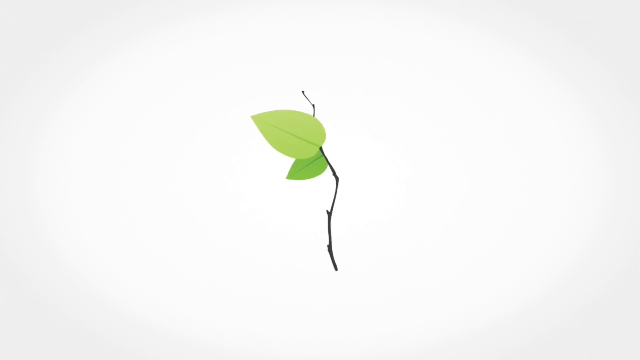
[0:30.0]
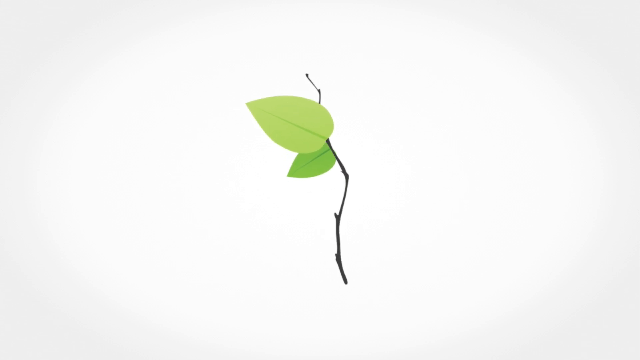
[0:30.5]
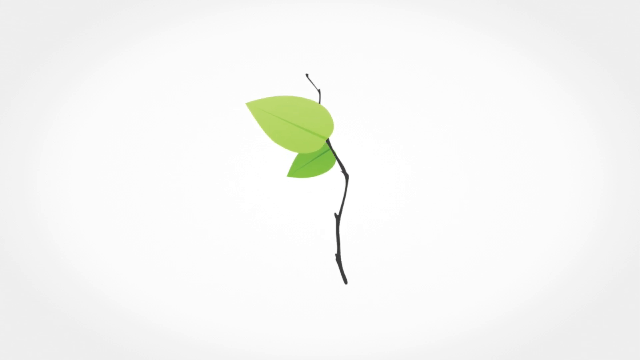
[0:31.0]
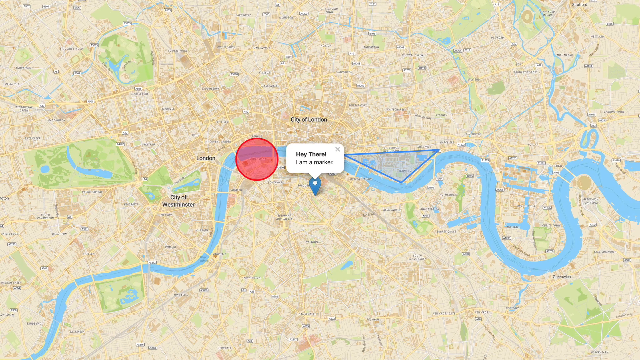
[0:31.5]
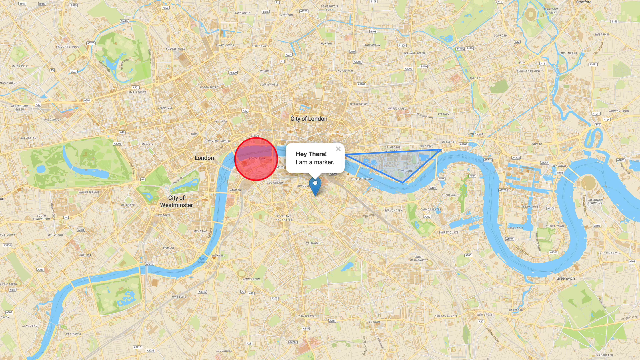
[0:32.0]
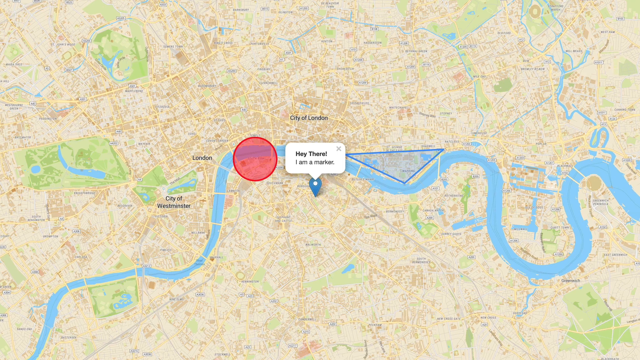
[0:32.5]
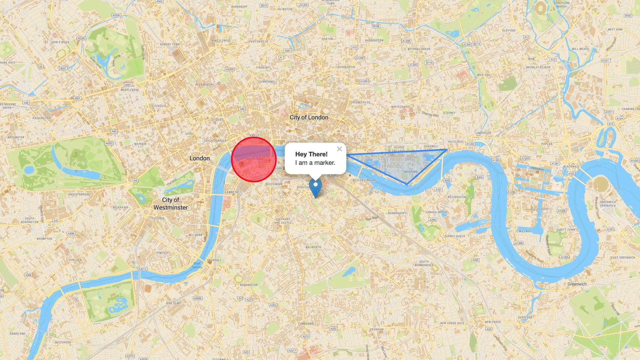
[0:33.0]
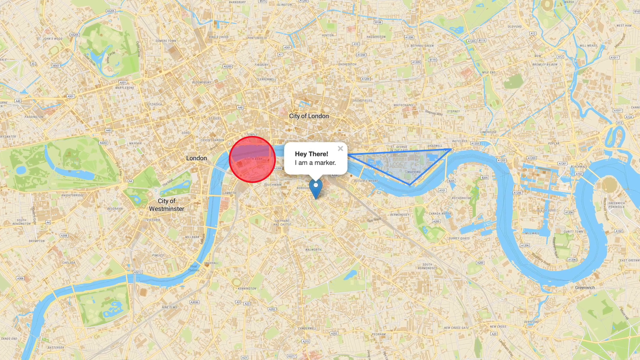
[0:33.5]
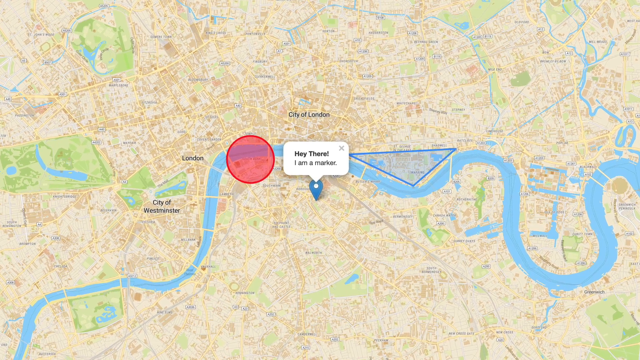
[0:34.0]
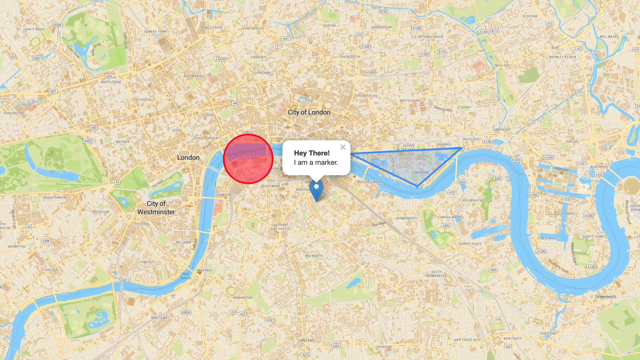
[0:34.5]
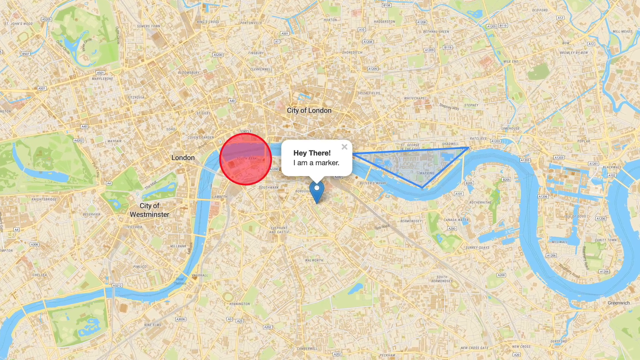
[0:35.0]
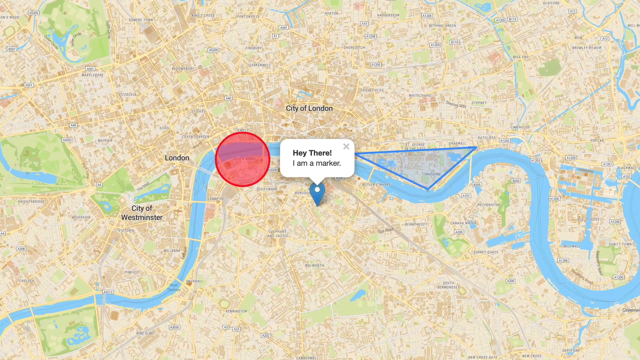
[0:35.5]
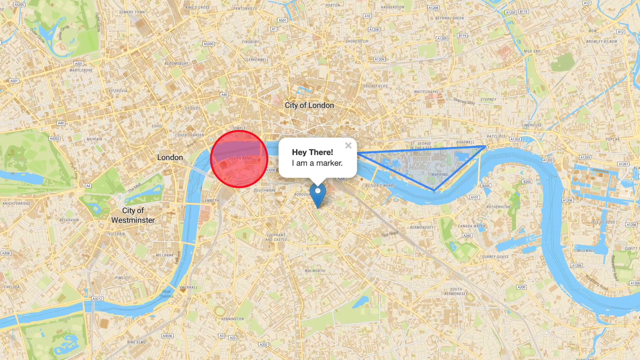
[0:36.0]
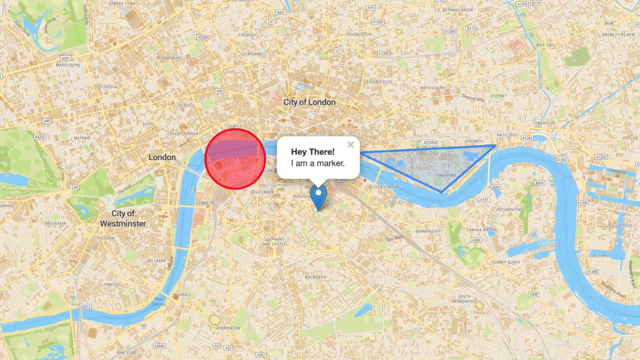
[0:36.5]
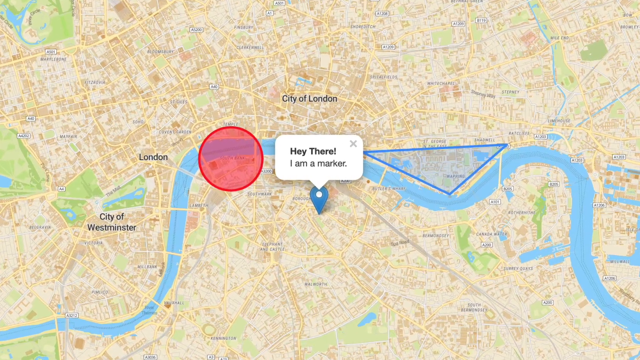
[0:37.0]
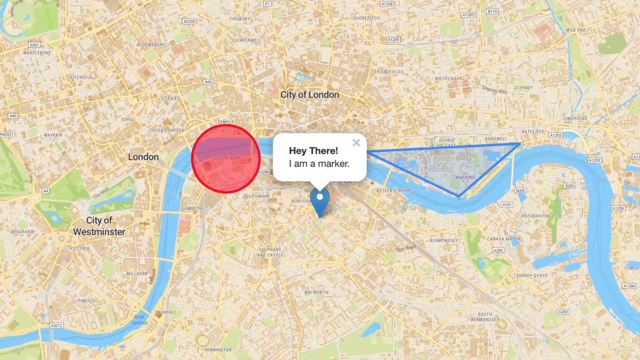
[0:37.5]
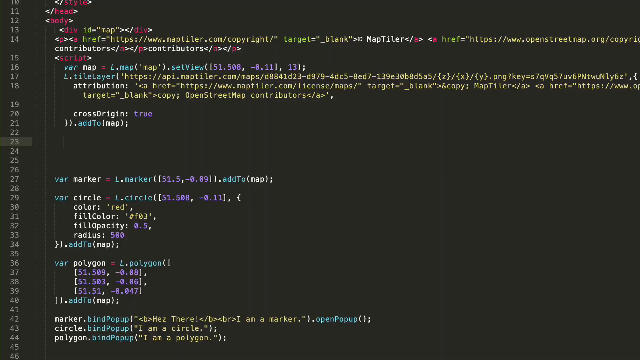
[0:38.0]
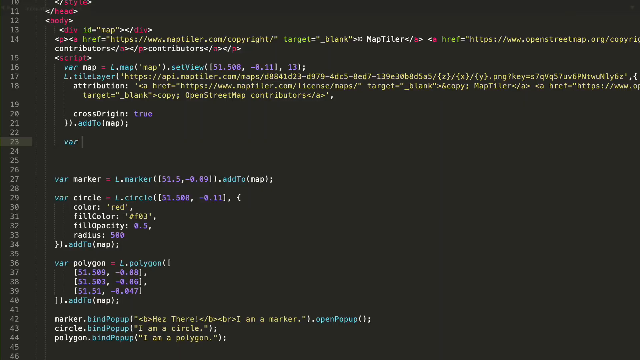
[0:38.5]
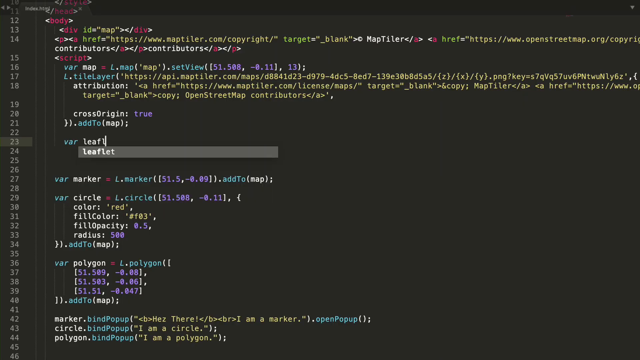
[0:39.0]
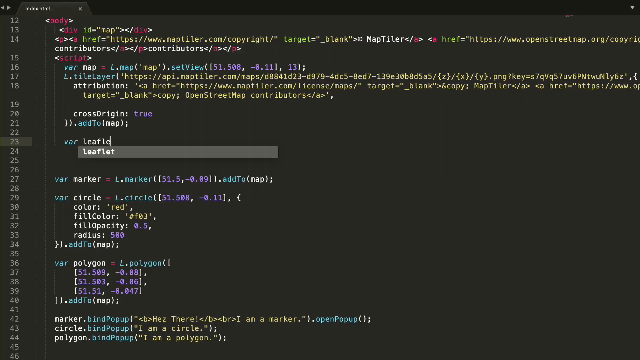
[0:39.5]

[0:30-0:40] A big map fills the background, and in the center of the map the text "hi there, I'm a marker" appears, with a little blue marker underneath it. To the left of it is a red circle, and to the right is a blue obtuse triangle turned upside down so its apex points downward. The view zooms in on the marker in the middle. The video then switches to a coding page, where a variable is being named by typing "var" and then "leaflet I".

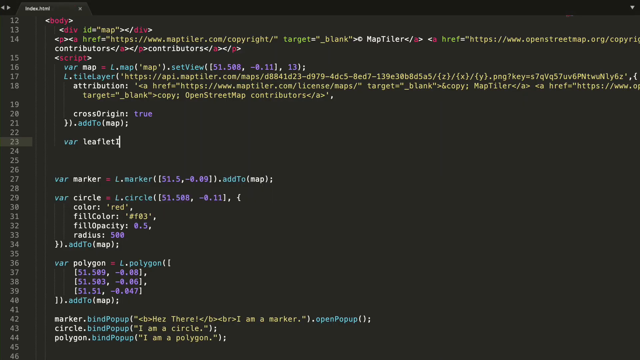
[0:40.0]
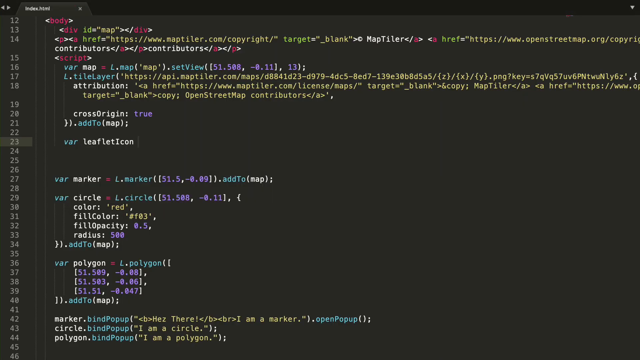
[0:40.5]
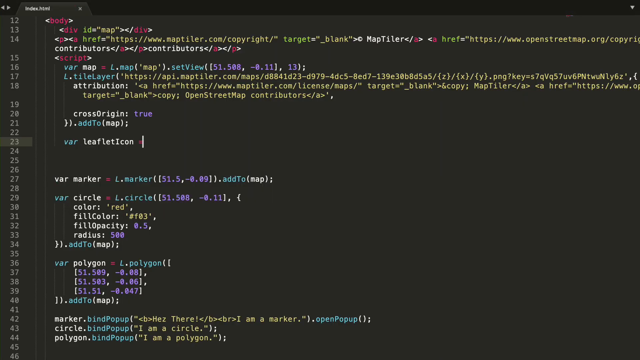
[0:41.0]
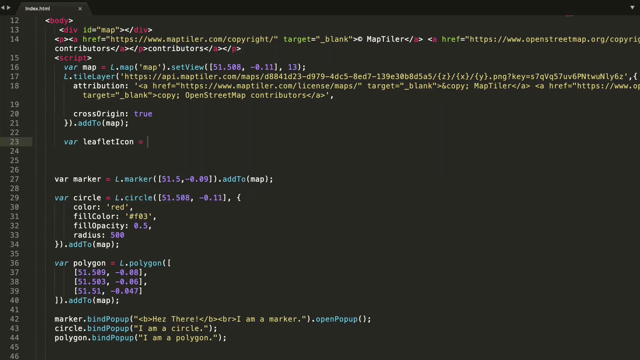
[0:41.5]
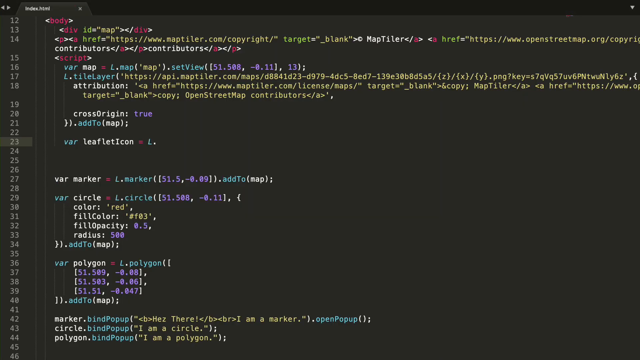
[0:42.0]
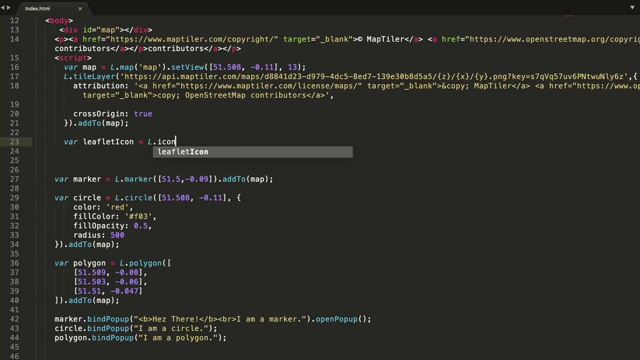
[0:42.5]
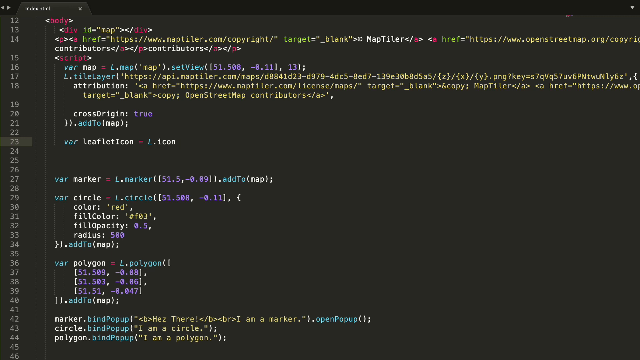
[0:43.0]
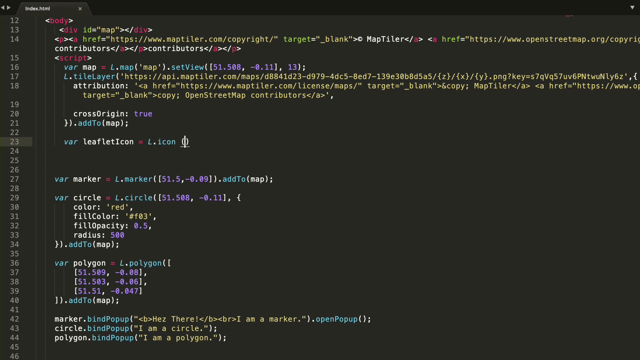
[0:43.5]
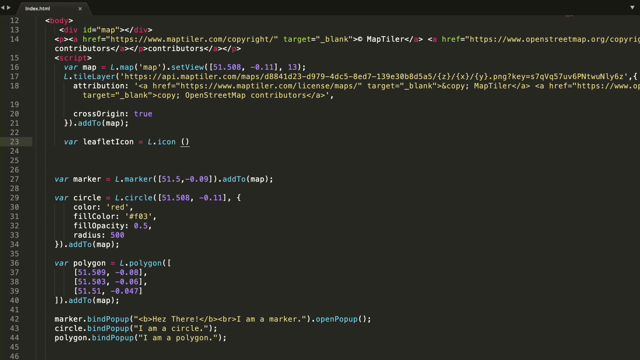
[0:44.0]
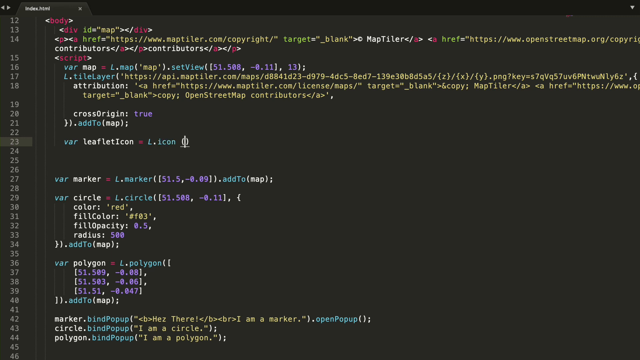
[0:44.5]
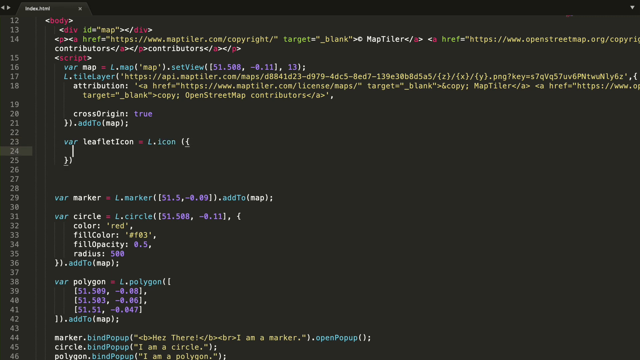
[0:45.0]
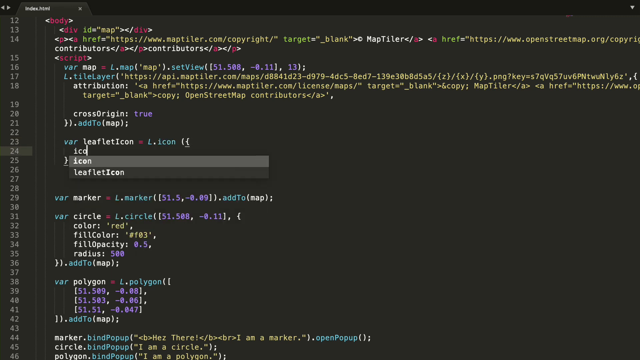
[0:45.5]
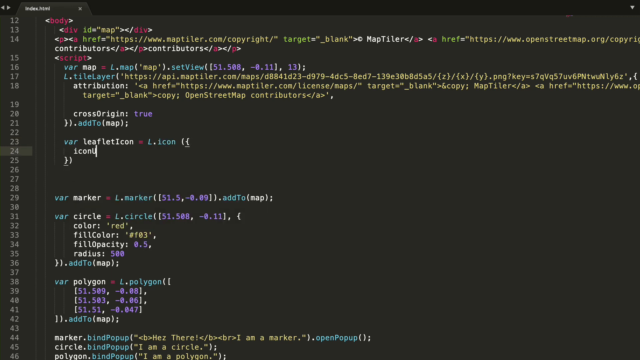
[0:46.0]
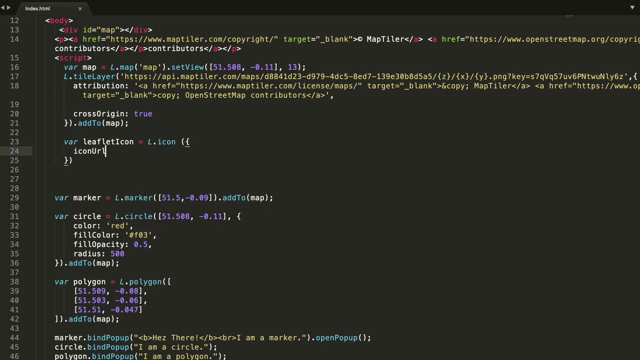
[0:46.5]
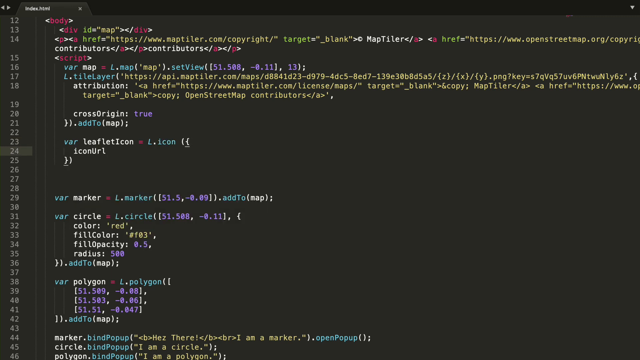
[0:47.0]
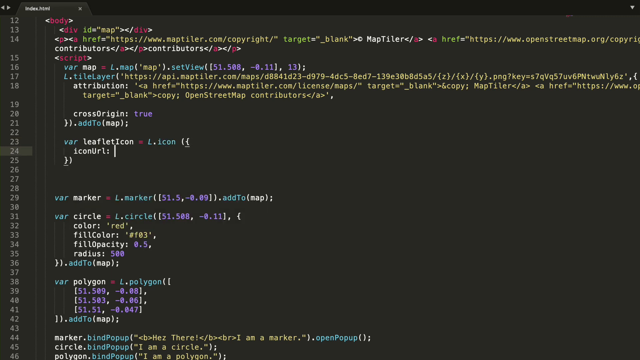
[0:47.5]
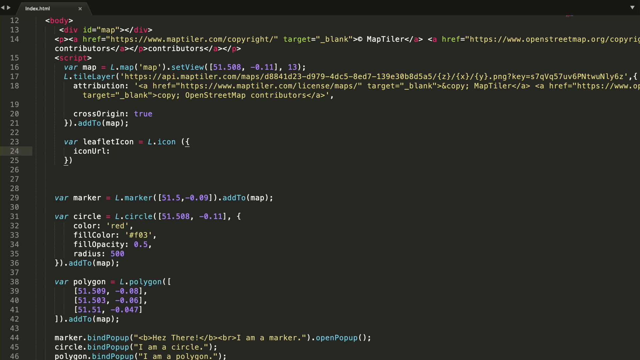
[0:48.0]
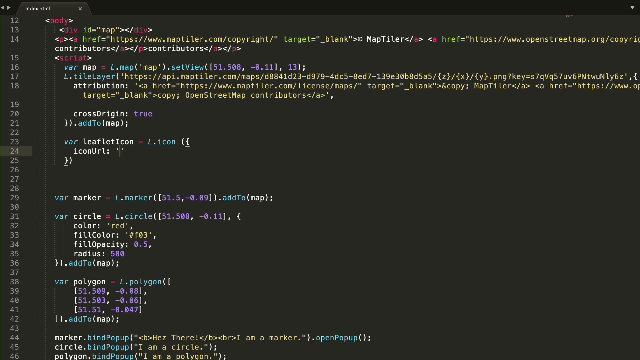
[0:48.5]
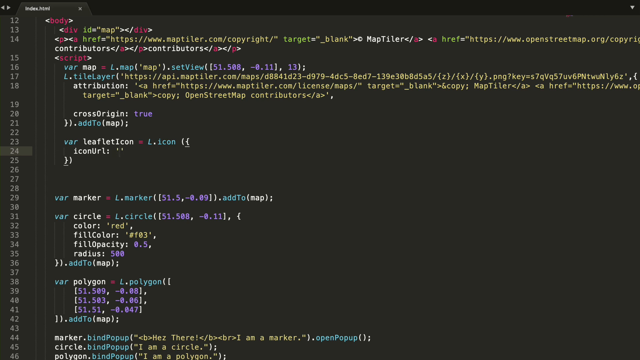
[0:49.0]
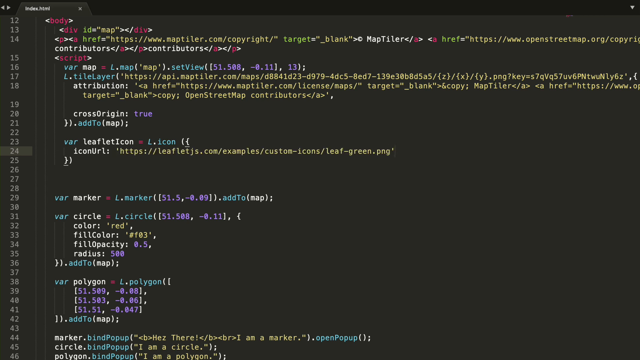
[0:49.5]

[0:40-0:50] On the coding page, the variable continues to be named: leaflet icon = l.icon, referencing icon url. A URL for the leaflet icon is entered, enter is pressed, and then "leaflet icon" appears, adding the leaflet icon to the code.